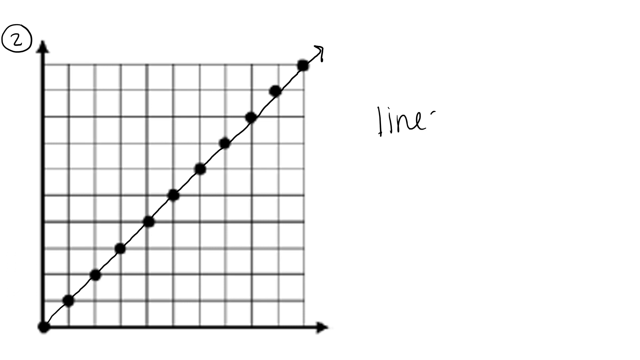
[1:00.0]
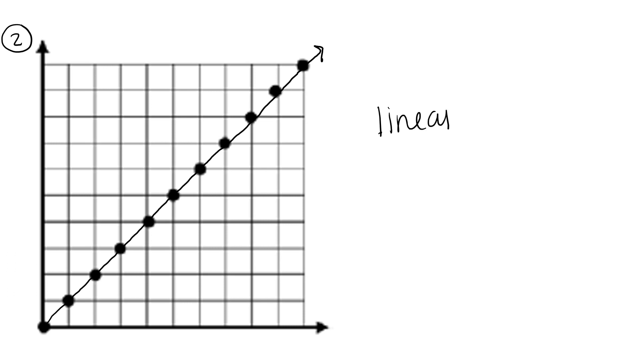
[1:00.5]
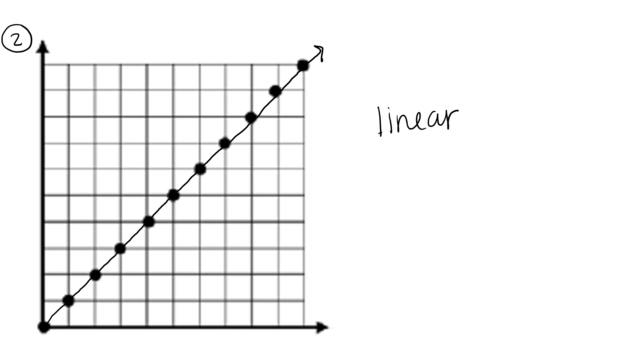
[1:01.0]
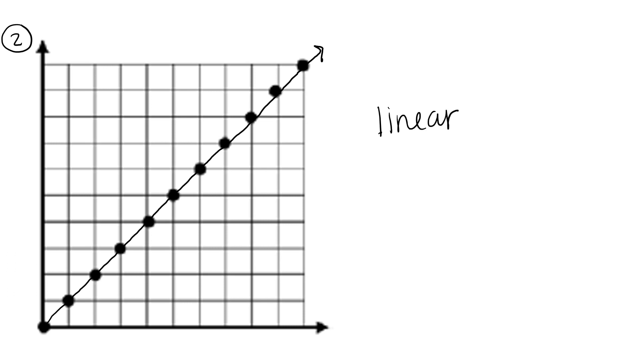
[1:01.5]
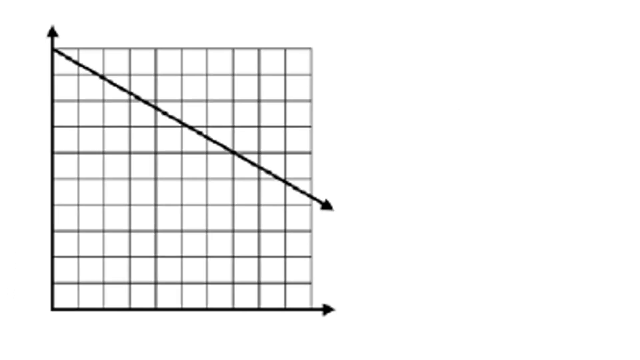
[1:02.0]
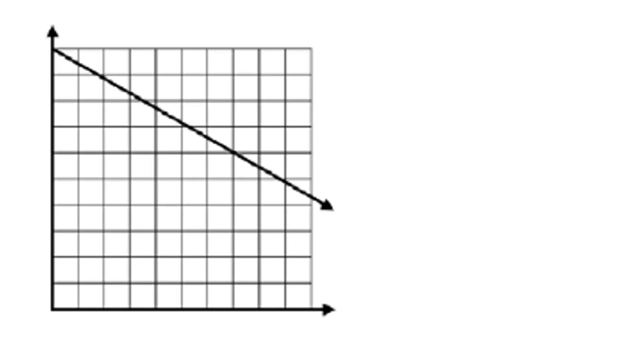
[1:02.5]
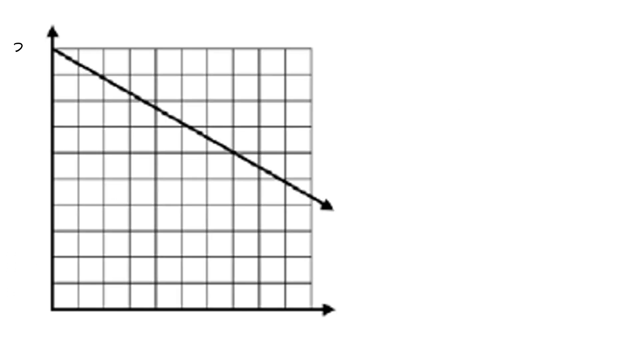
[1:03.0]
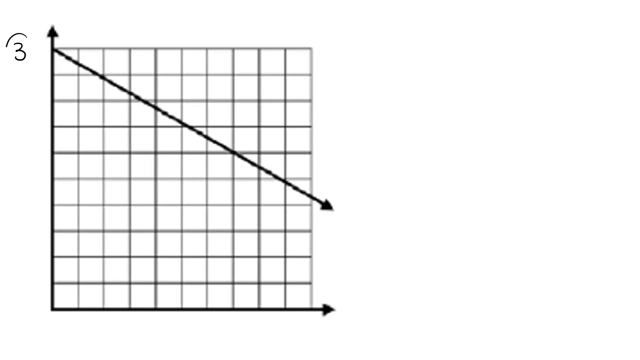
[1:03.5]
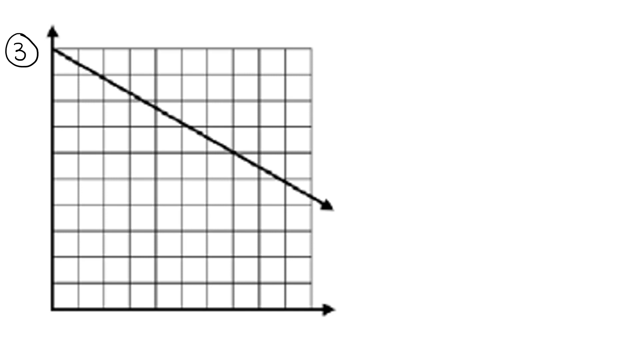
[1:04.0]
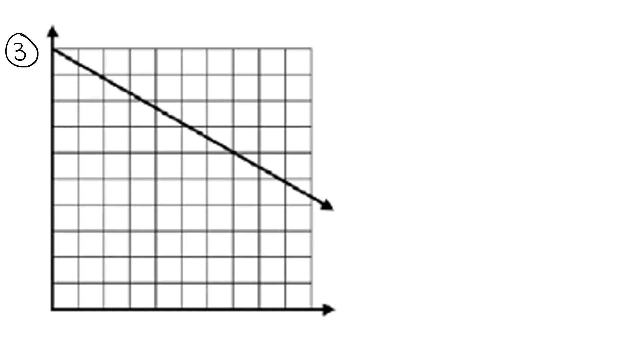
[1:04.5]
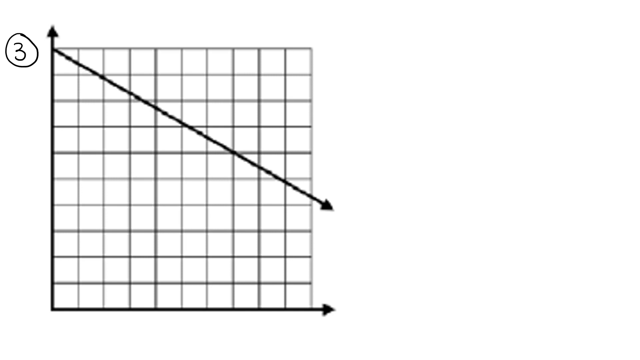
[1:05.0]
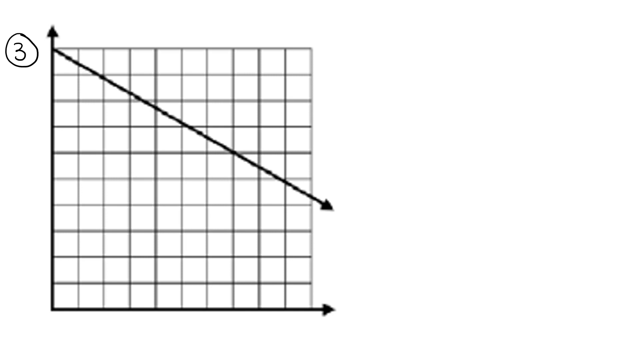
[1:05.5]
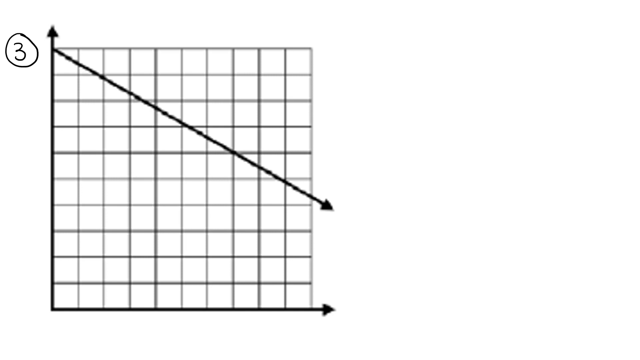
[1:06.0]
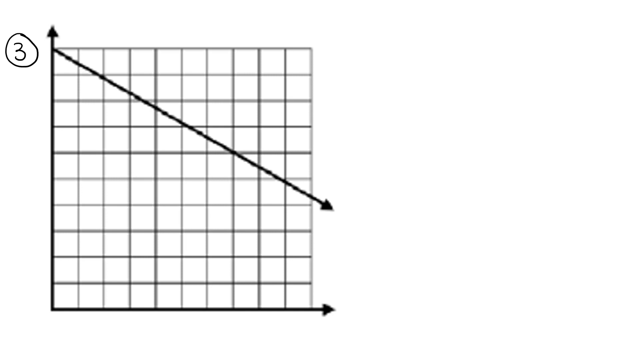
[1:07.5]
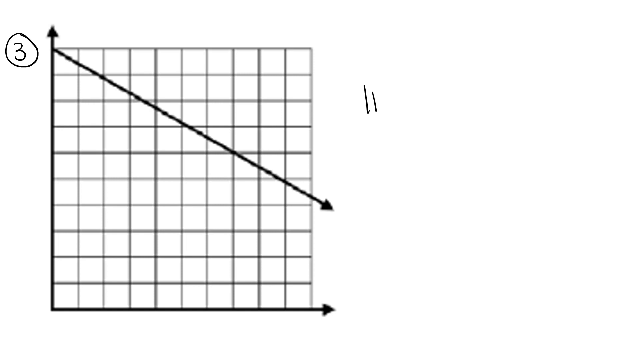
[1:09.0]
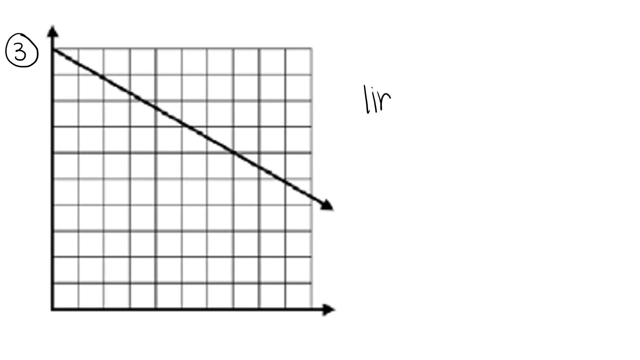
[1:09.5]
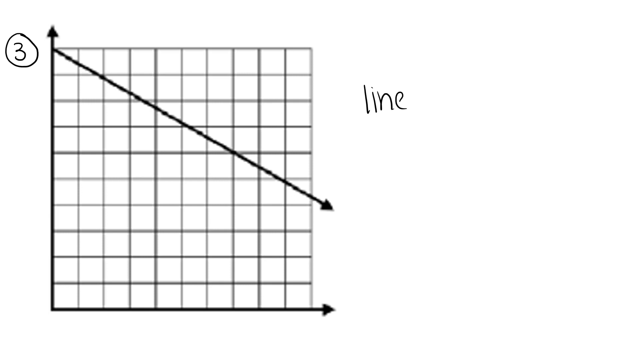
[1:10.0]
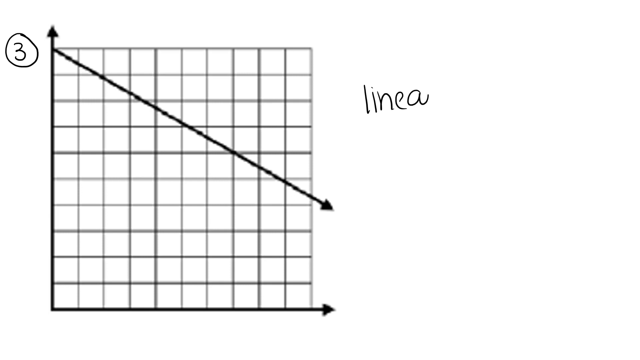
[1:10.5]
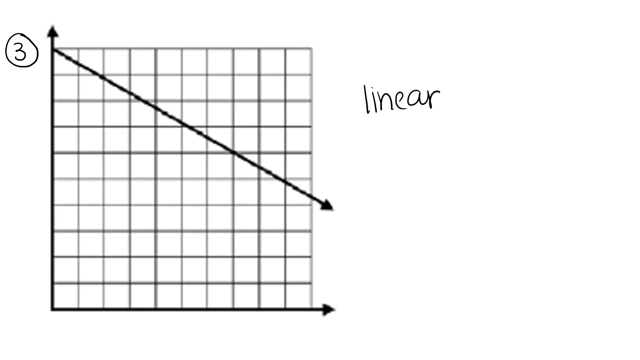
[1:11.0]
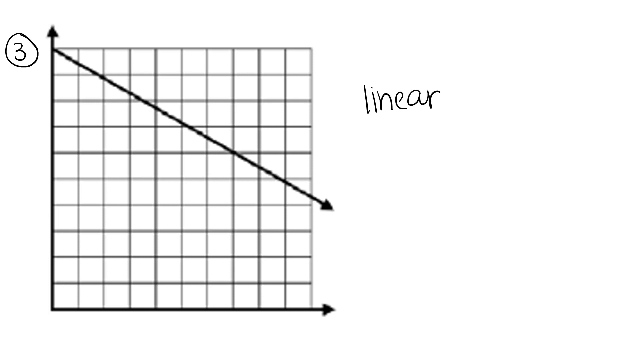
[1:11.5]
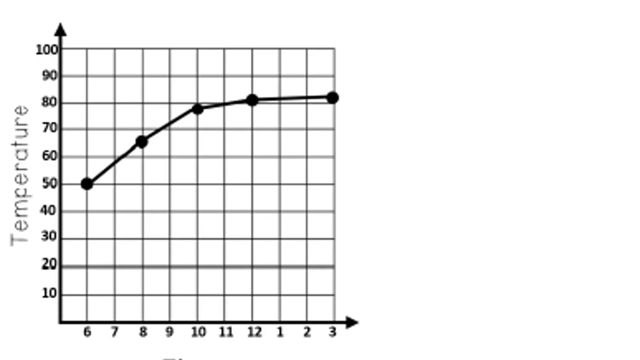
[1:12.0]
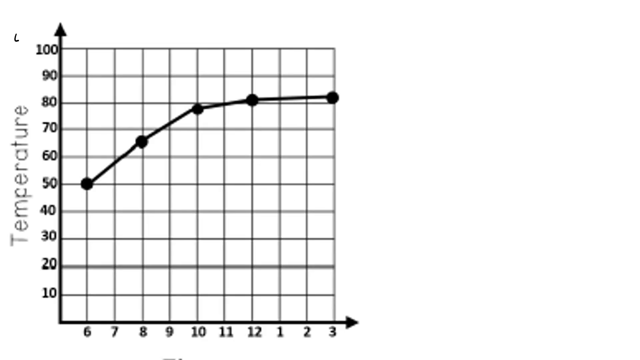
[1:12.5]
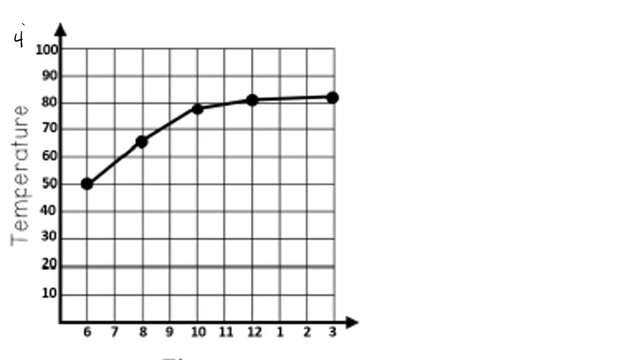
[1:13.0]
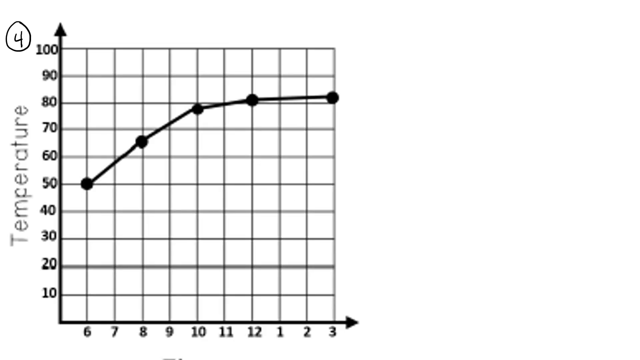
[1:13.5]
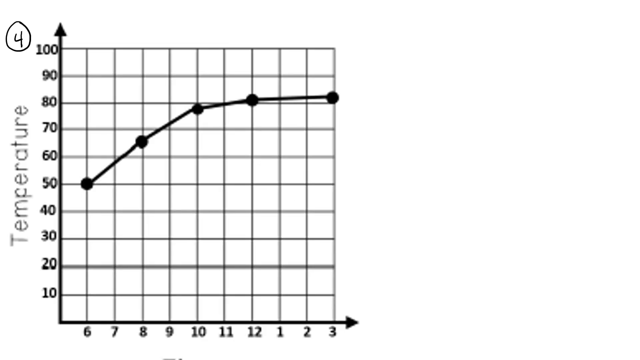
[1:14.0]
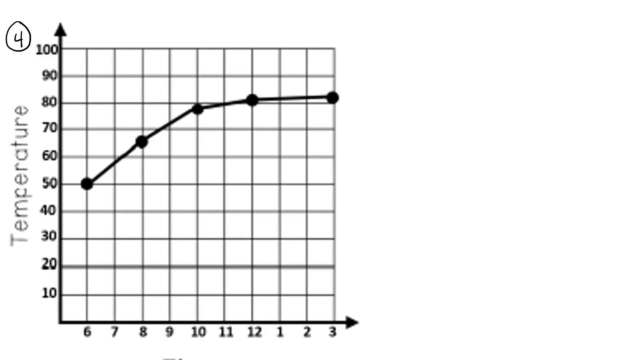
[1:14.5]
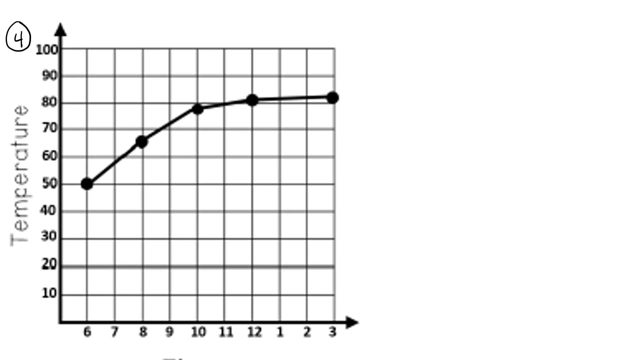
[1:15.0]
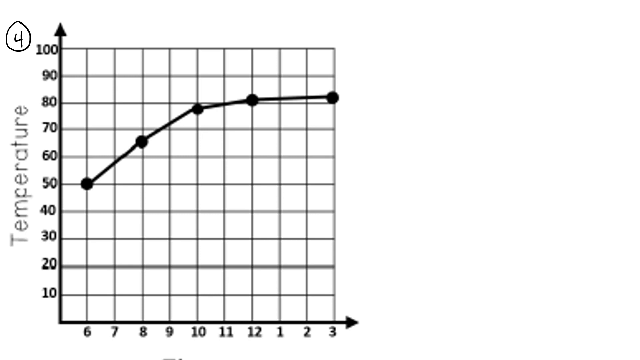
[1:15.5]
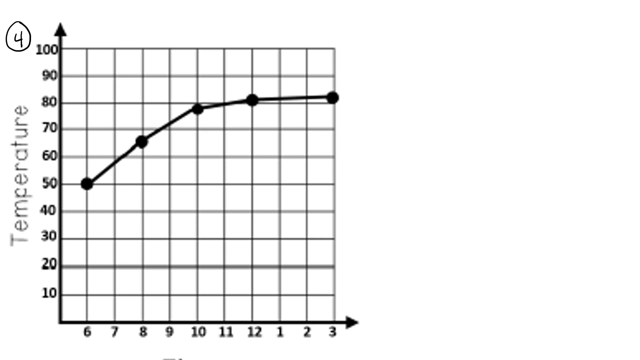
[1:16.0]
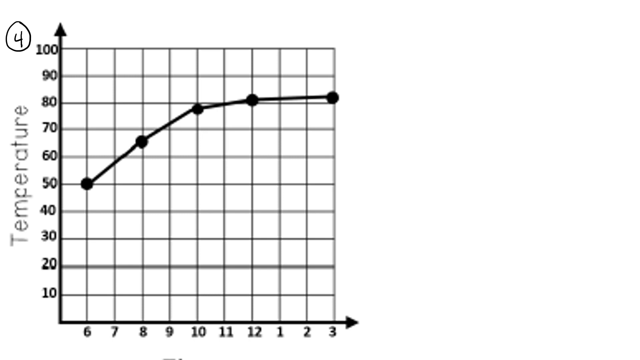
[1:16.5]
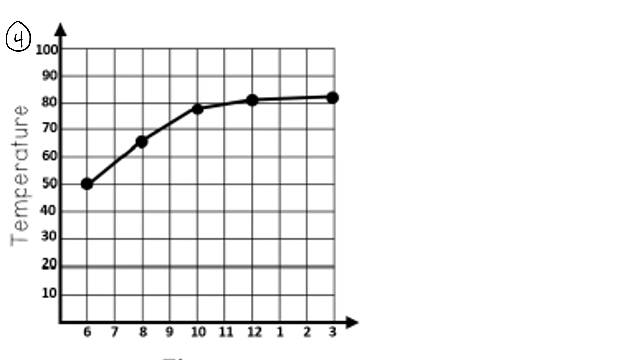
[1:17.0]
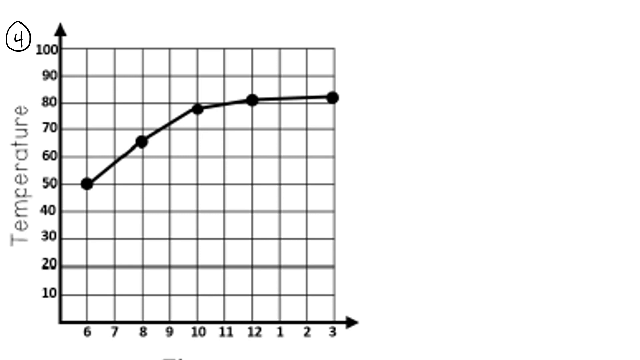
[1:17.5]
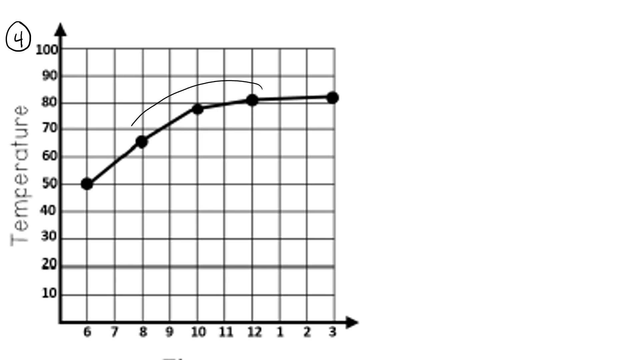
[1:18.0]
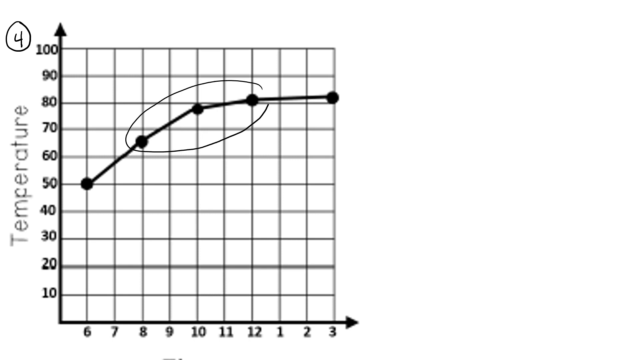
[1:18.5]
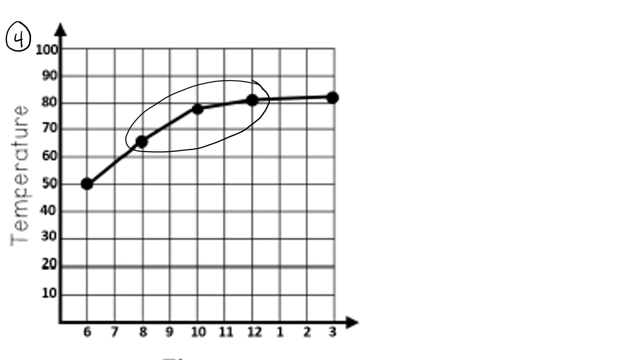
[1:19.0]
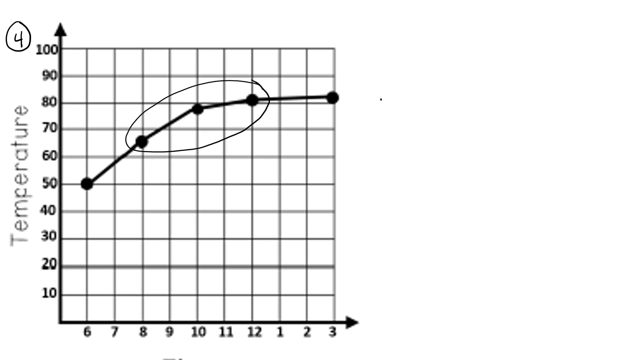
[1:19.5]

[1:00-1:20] A graph is drawn on y and x axes, with the number 2 written at the top left. It is first marked with black dots on what looks like graph book paper with small squares. The word "linear" is handwritten at the top right. The dots are then joined by one straight line that cuts across the graph paper from southwest to northeast. Next comes a diagram numbered three, with a straight line running from northwest to southeast and the word "linear" written at the top right.